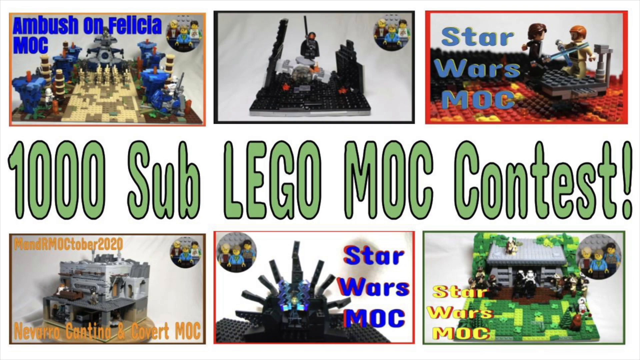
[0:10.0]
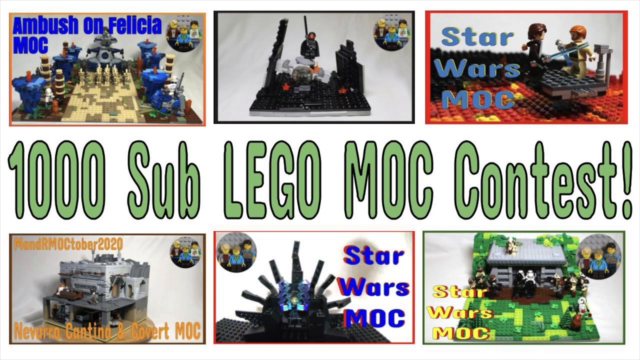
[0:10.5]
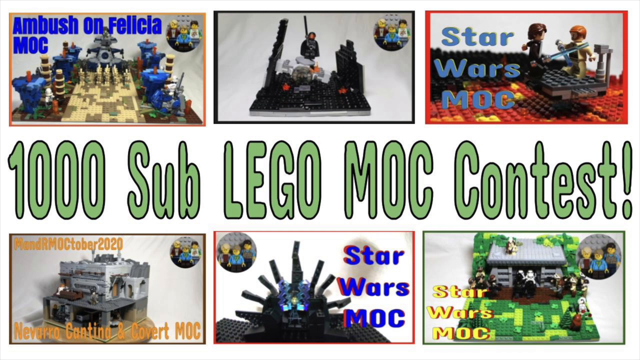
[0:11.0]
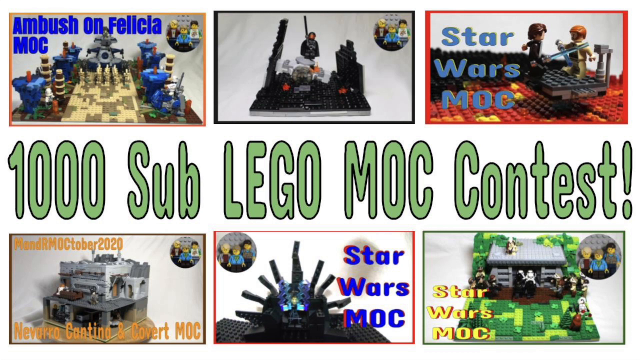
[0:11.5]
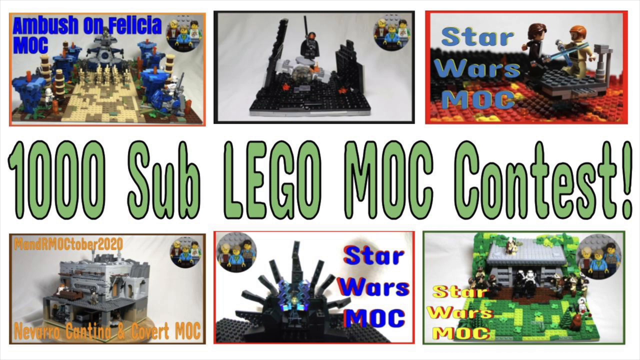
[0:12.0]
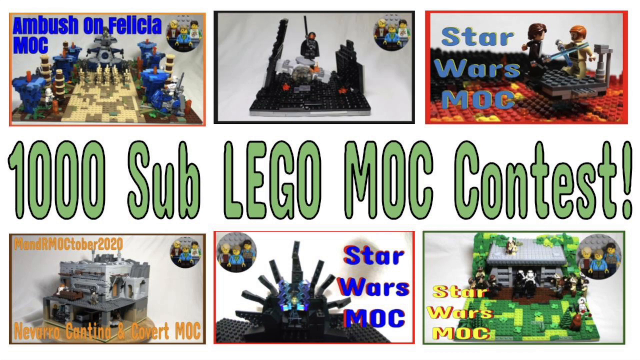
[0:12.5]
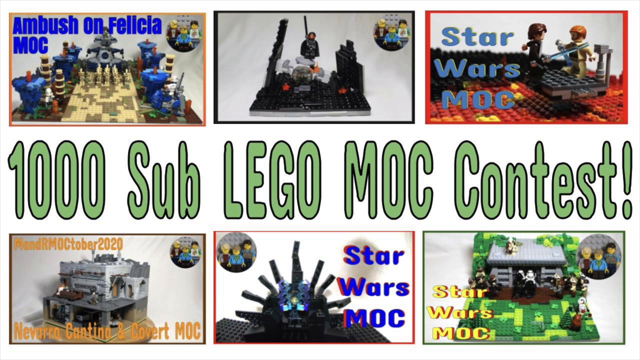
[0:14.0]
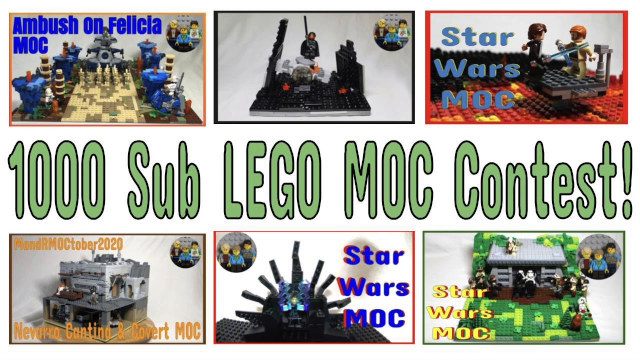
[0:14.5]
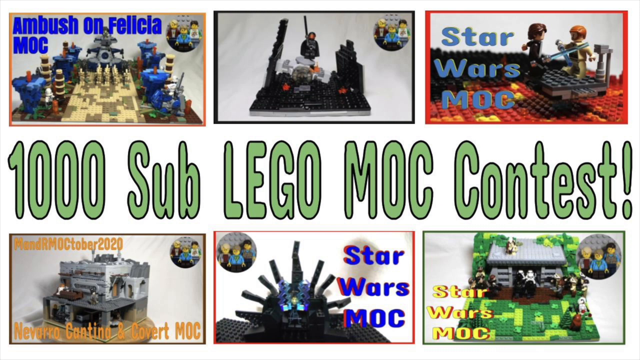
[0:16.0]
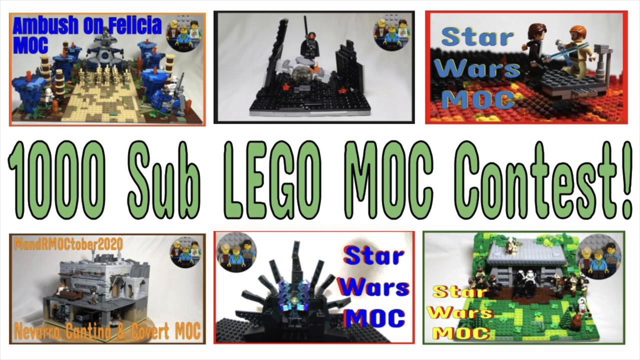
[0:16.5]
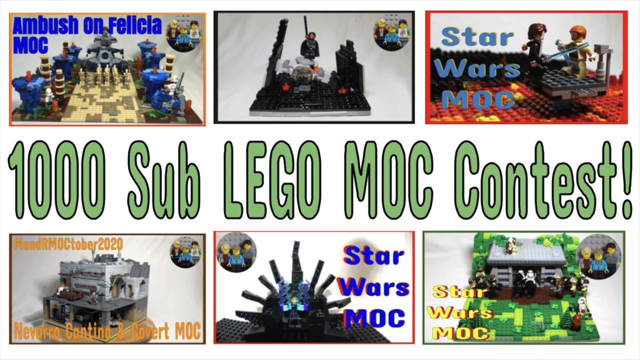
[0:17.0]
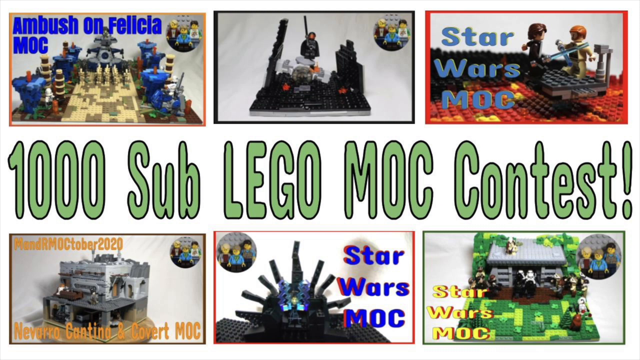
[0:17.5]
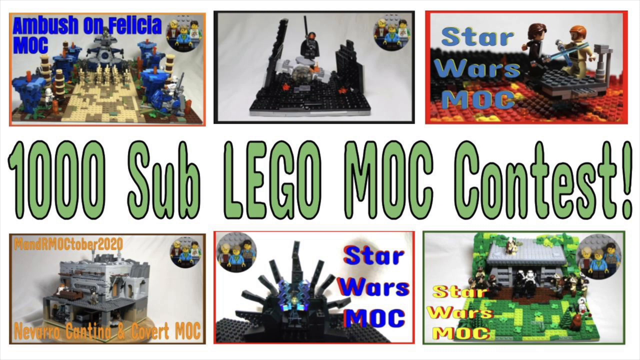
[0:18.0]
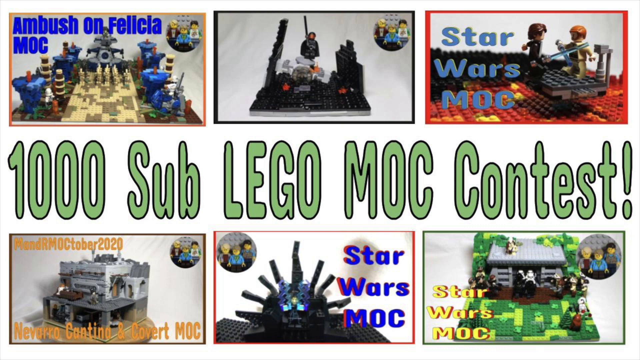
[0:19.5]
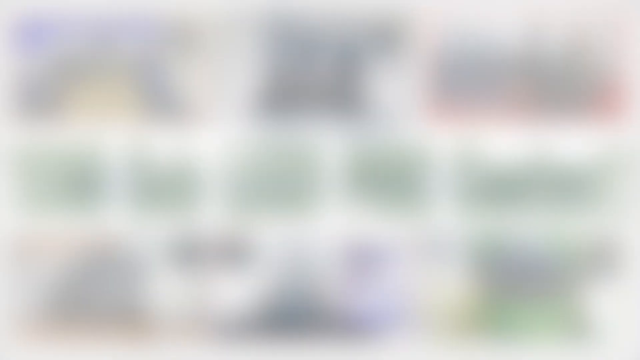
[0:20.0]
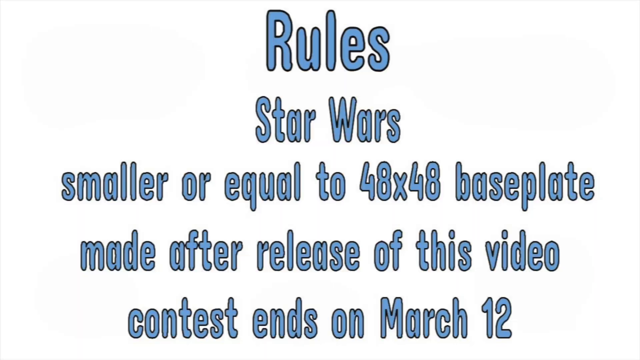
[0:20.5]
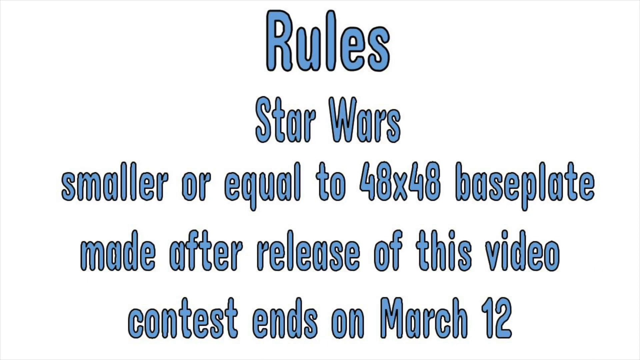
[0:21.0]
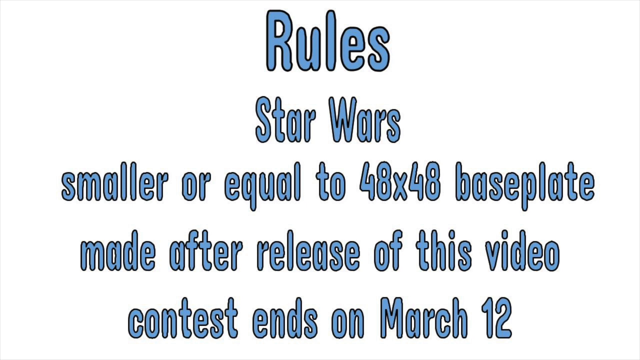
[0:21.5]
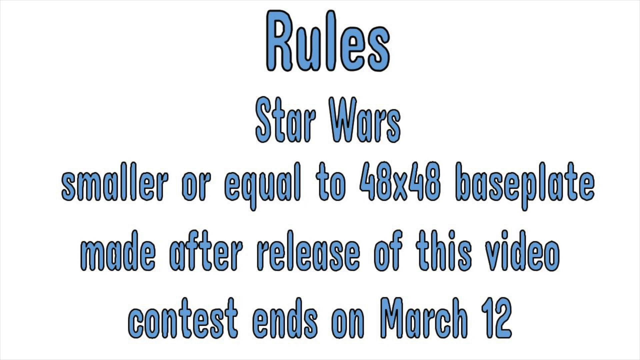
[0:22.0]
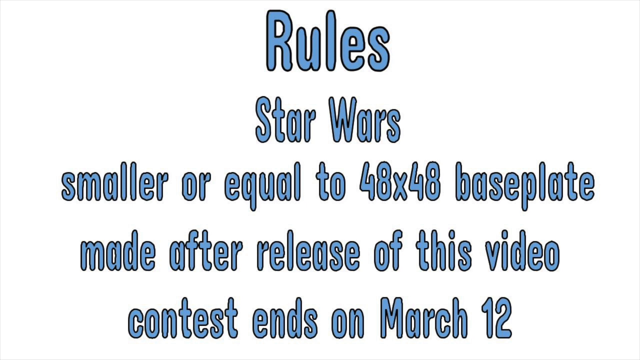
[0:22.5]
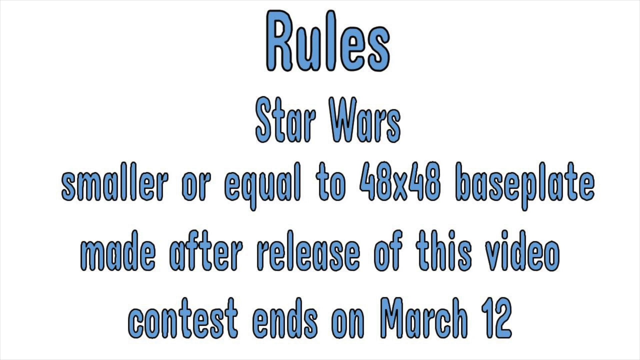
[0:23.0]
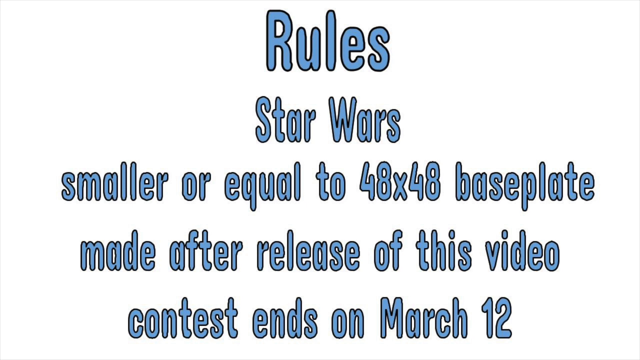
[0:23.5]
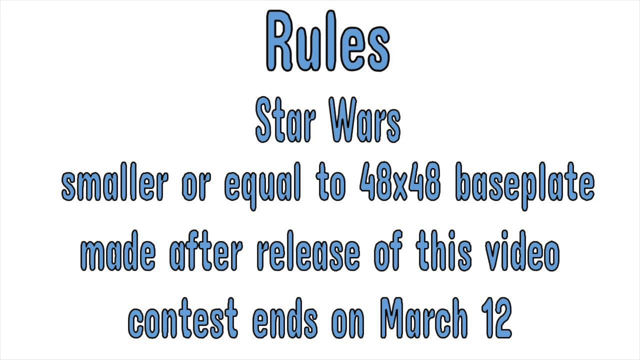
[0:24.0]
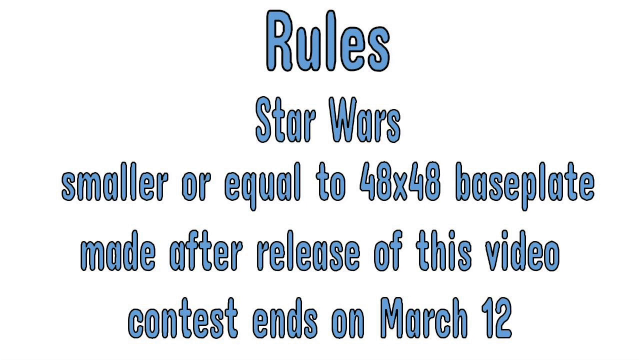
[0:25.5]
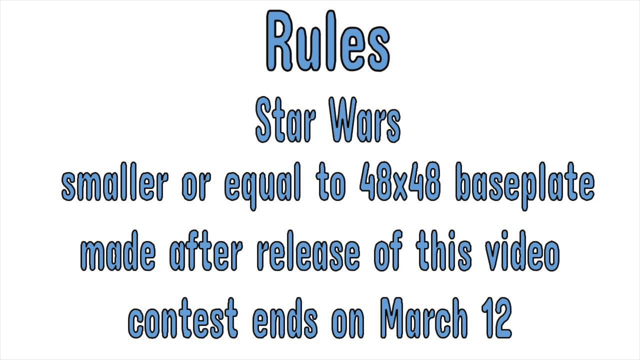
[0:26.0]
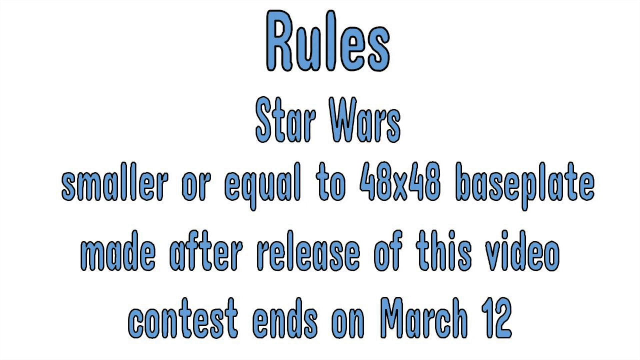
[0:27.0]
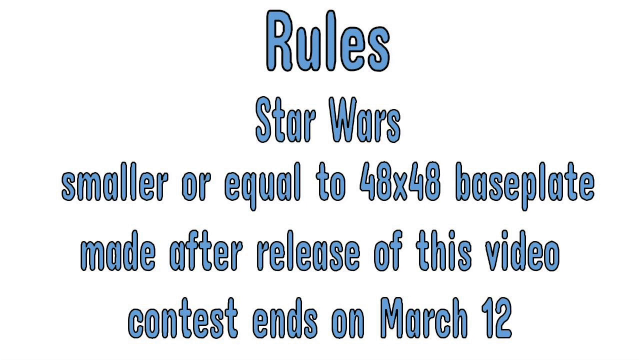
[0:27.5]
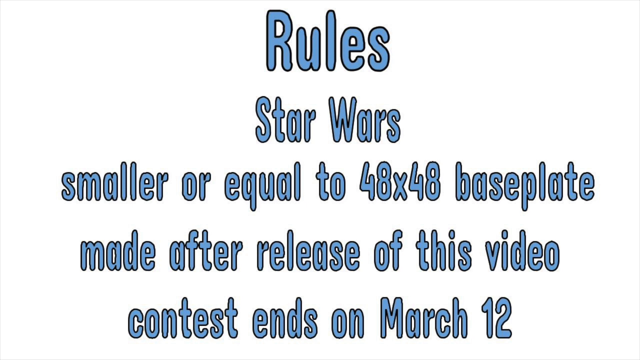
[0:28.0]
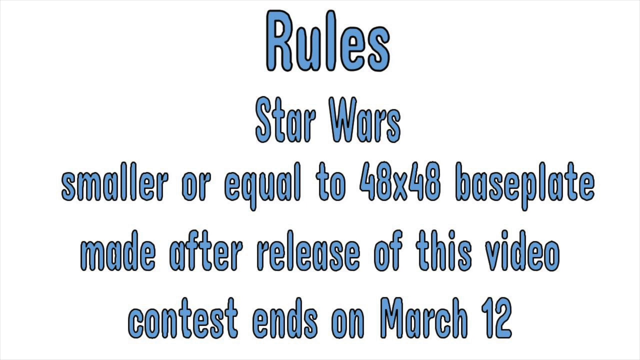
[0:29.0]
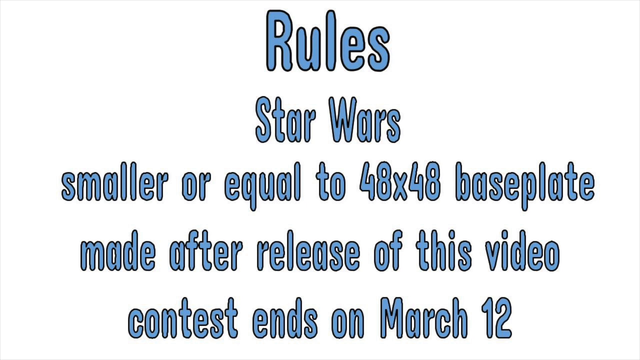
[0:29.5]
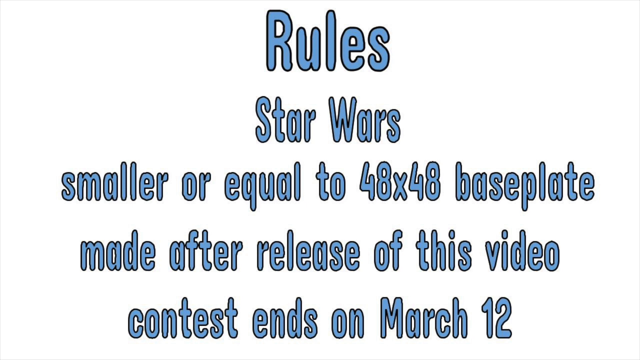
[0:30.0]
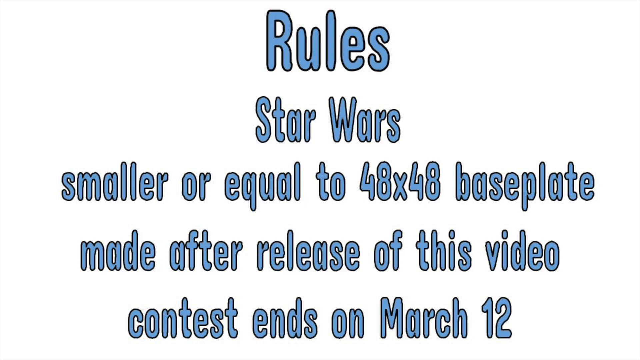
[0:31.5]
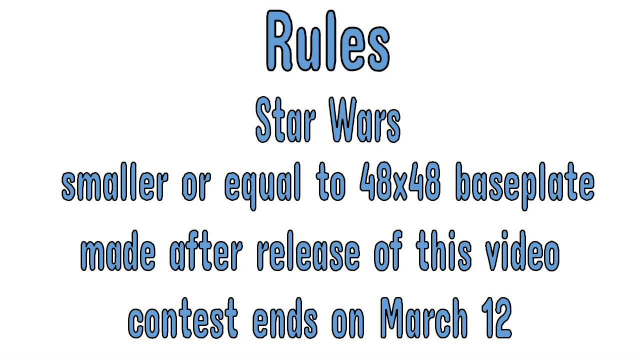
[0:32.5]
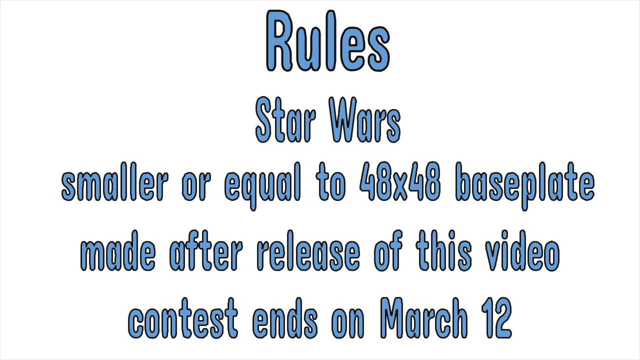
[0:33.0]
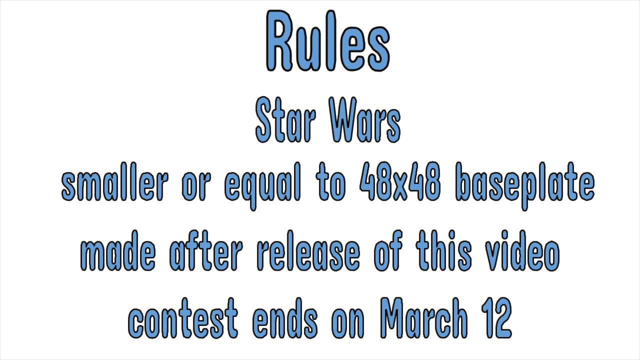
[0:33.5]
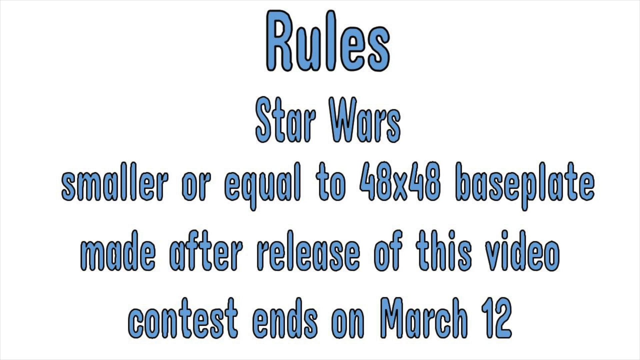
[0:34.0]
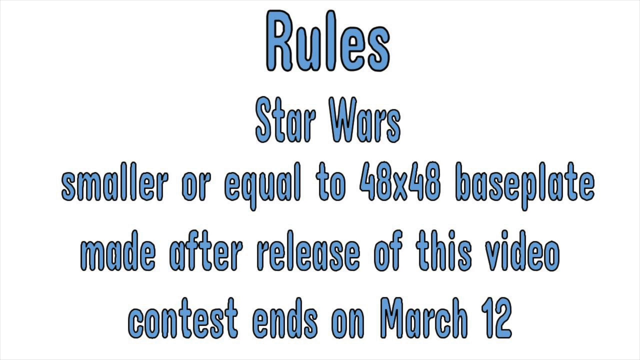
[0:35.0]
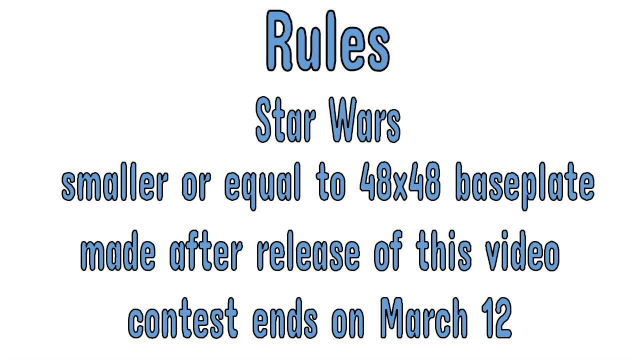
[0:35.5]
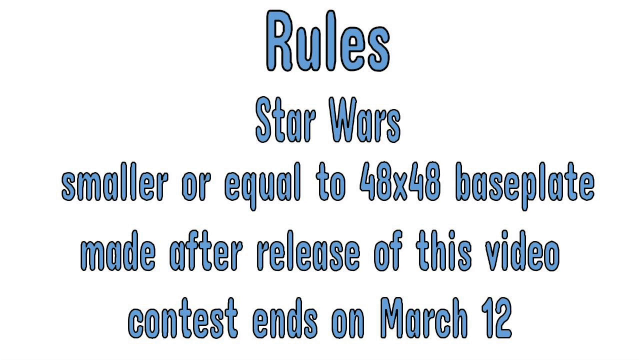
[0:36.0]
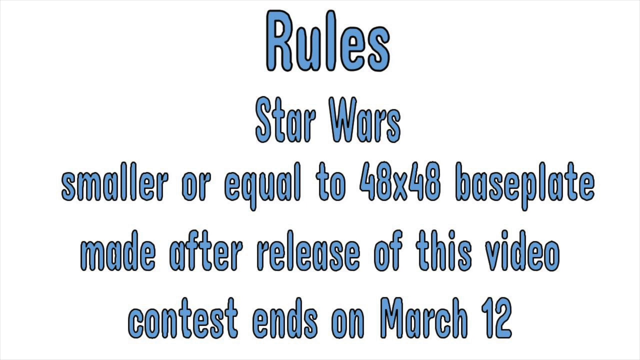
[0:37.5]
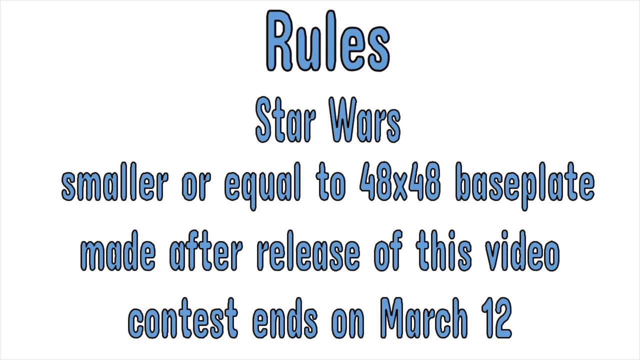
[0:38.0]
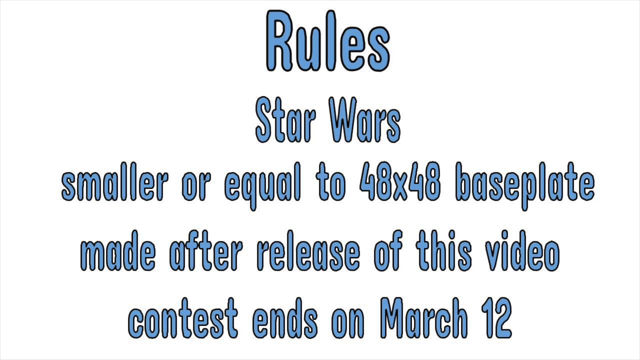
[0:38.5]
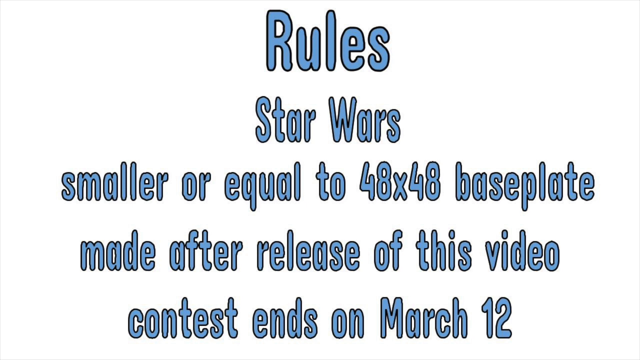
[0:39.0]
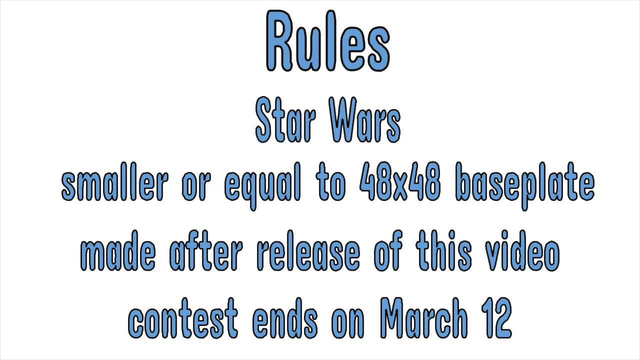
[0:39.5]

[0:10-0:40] The video begins with the cover page of the 1000 sub Lego MOC contest, which has six images, three on top and three on the bottom. A page then reads "rules Star Wars smaller or equal to 48 by 48 base plate made after release of this video contest ends on March 12th." The letters are written in blue on a white backdrop. It is a very plain page with not much going on, more or less just a statement.